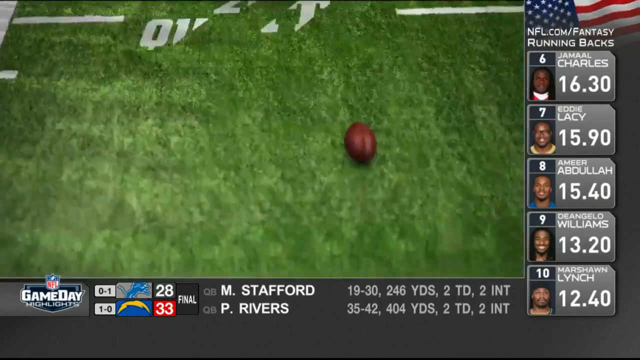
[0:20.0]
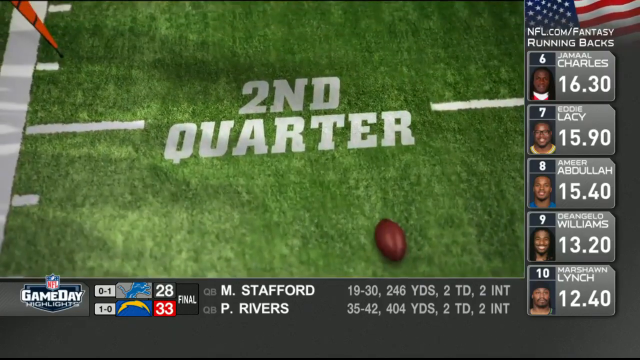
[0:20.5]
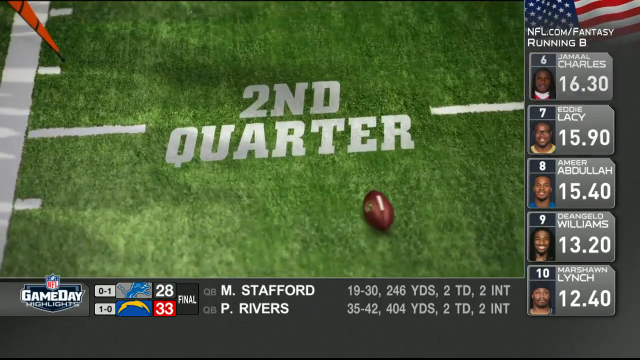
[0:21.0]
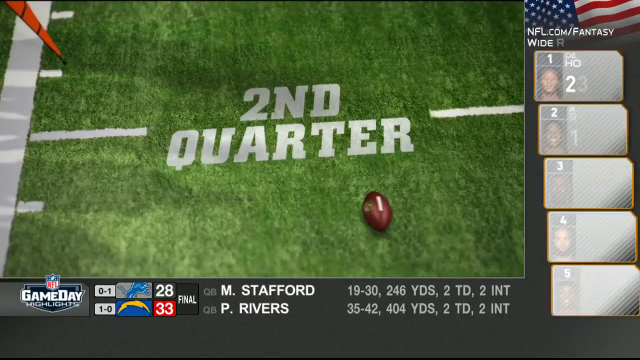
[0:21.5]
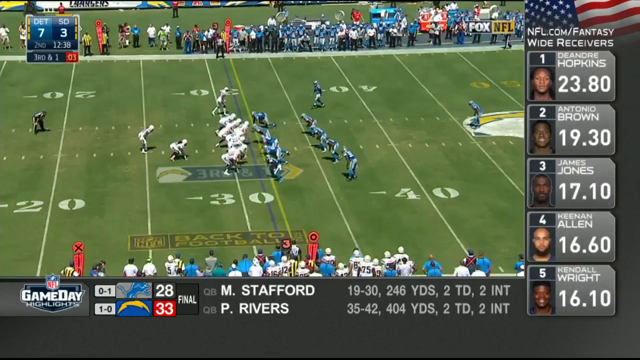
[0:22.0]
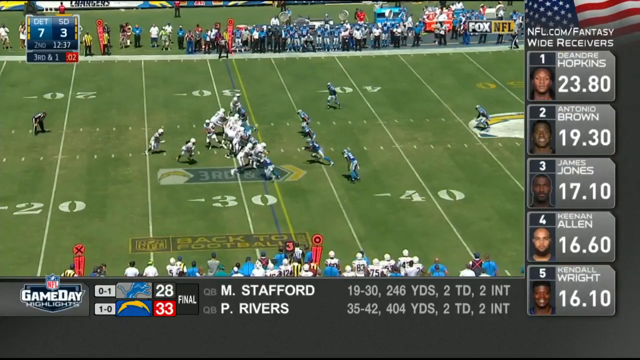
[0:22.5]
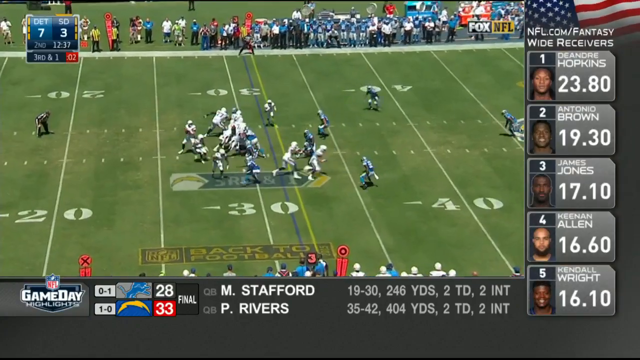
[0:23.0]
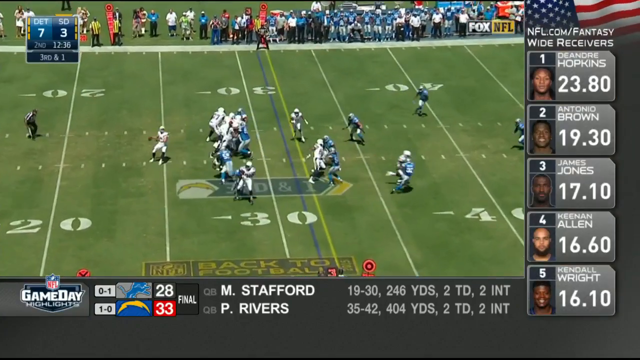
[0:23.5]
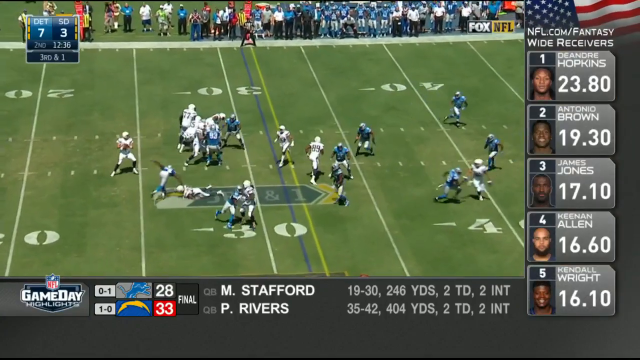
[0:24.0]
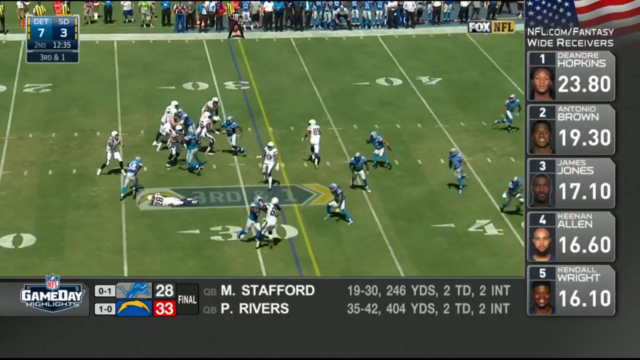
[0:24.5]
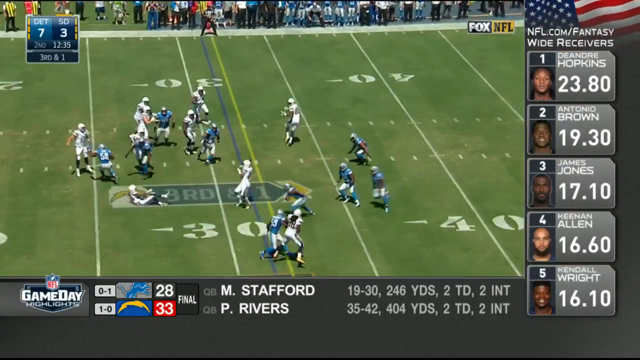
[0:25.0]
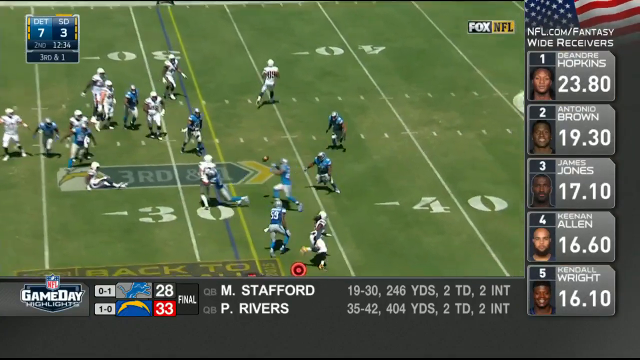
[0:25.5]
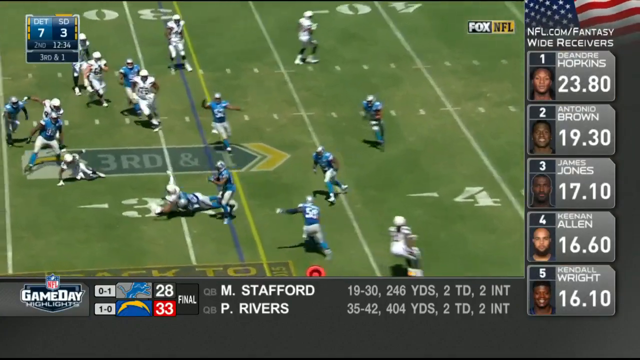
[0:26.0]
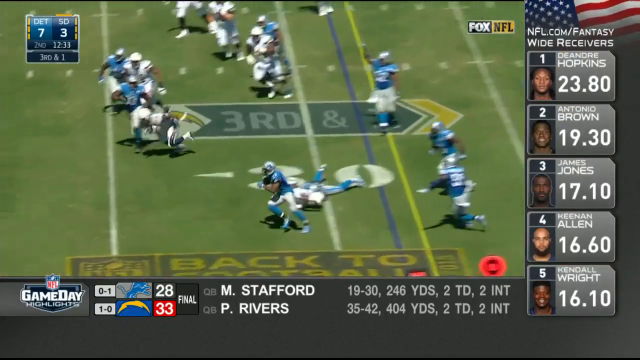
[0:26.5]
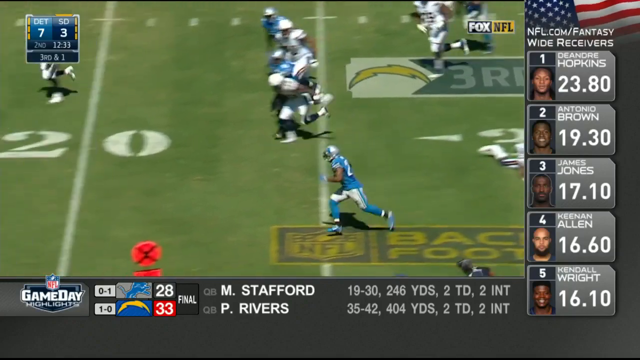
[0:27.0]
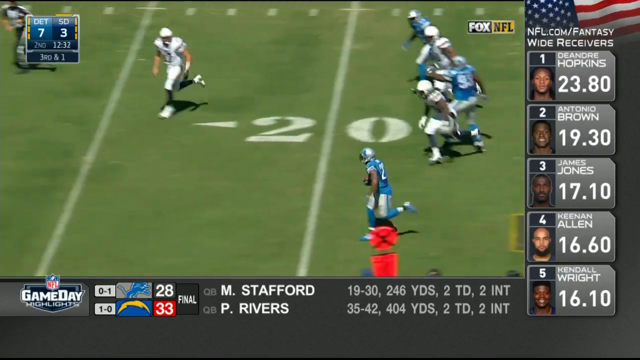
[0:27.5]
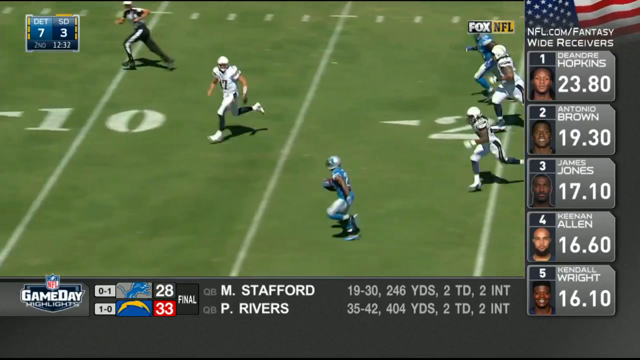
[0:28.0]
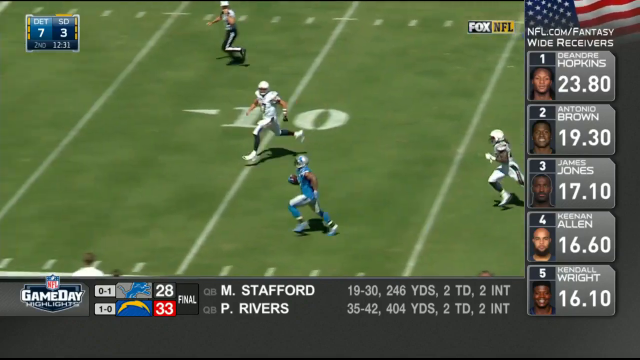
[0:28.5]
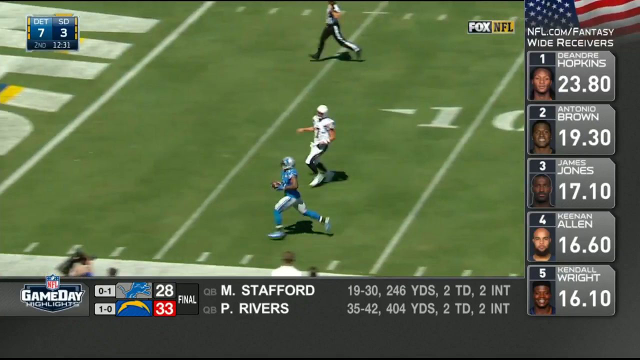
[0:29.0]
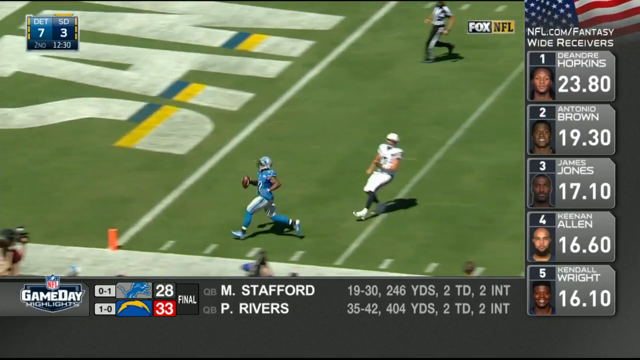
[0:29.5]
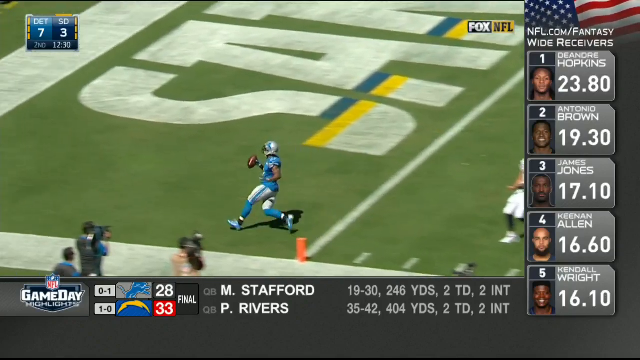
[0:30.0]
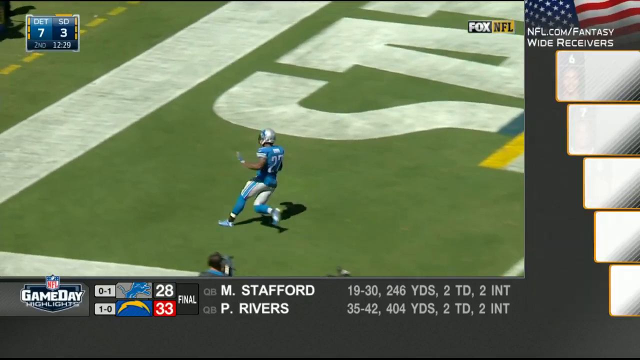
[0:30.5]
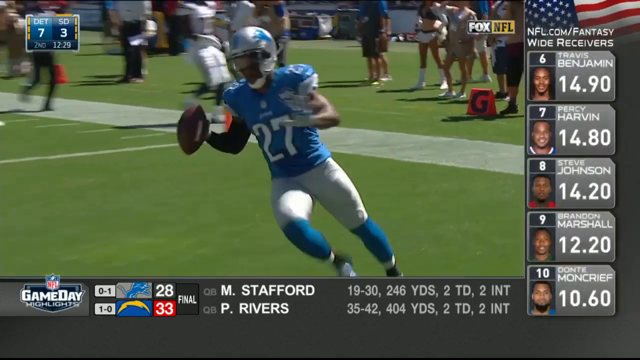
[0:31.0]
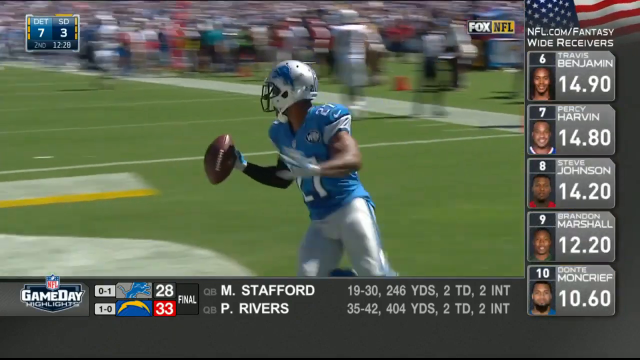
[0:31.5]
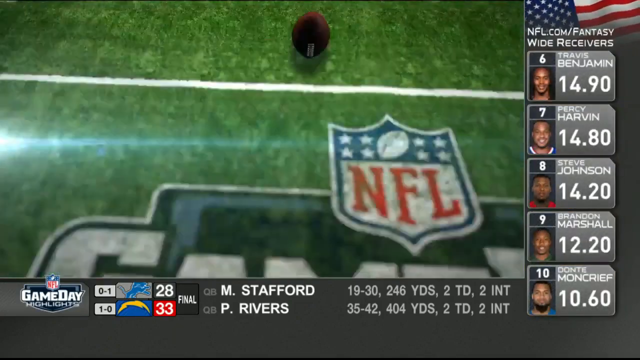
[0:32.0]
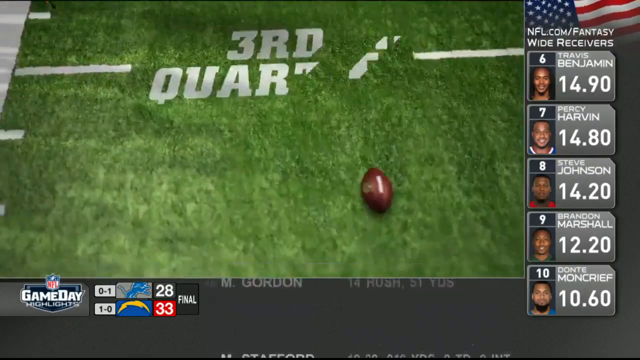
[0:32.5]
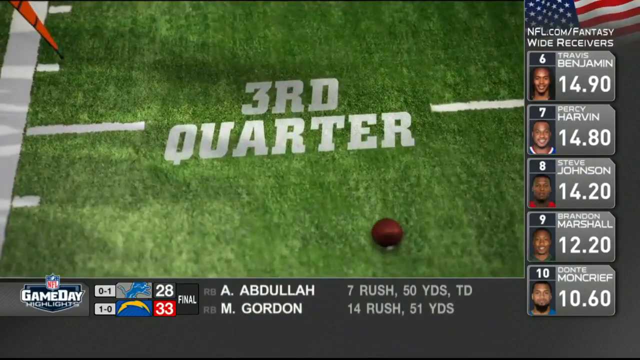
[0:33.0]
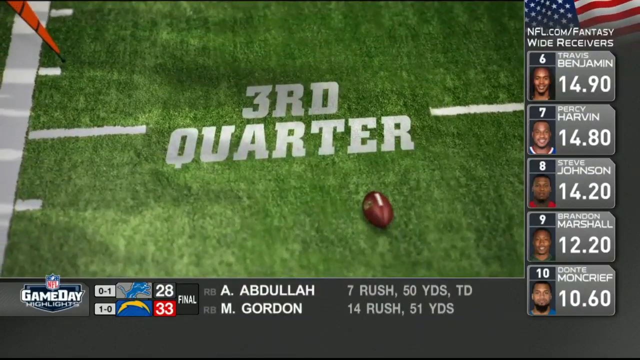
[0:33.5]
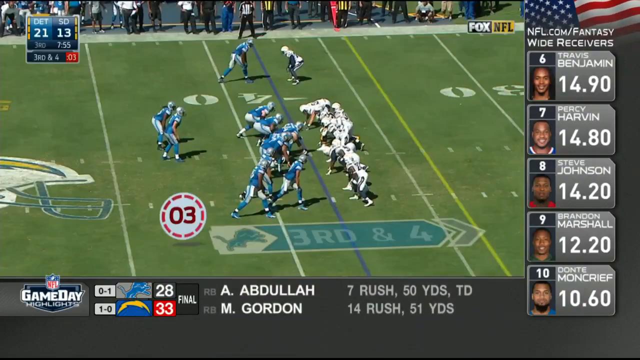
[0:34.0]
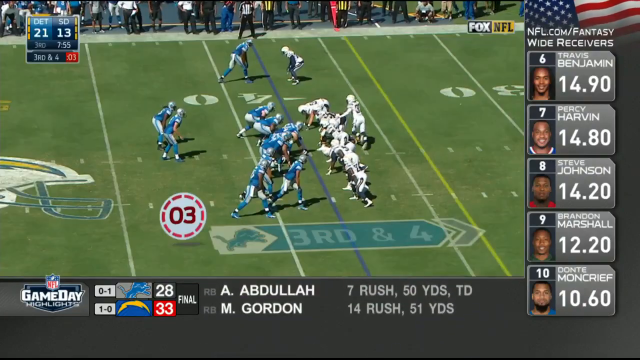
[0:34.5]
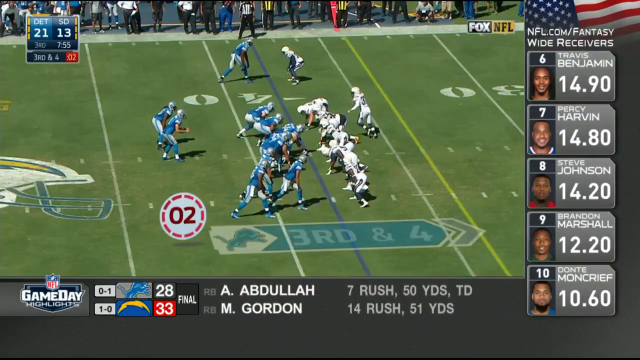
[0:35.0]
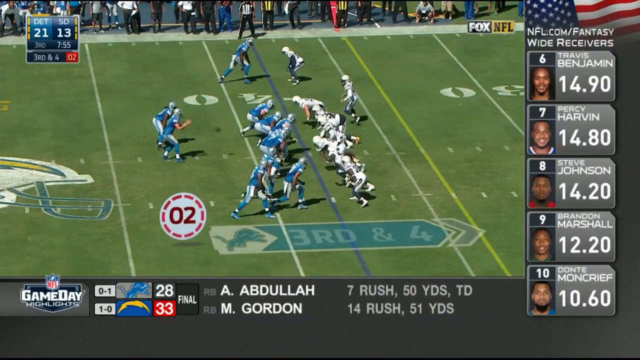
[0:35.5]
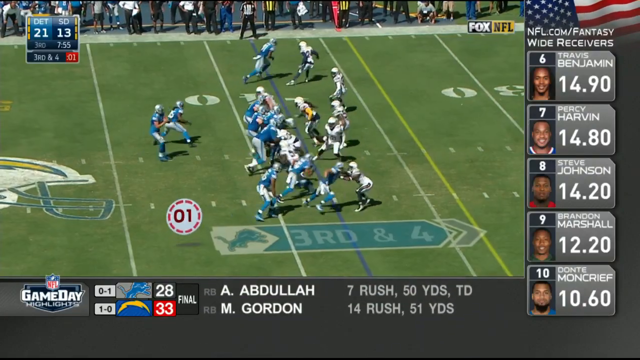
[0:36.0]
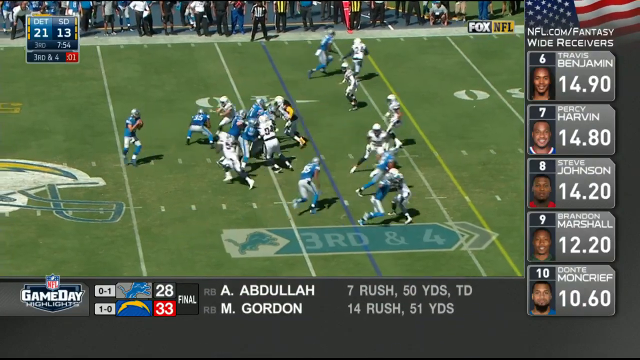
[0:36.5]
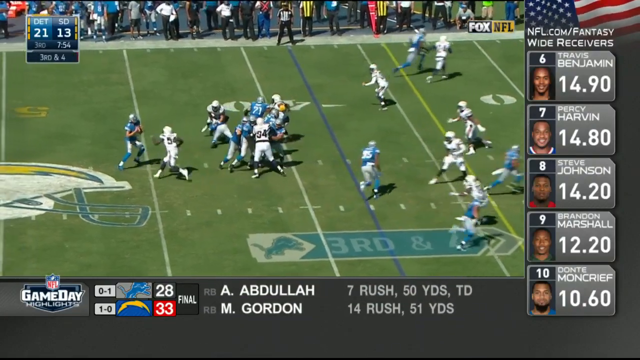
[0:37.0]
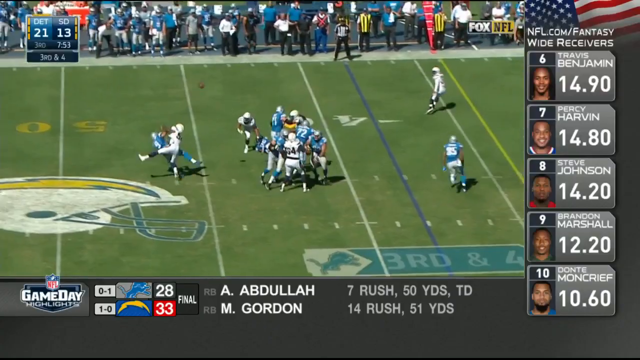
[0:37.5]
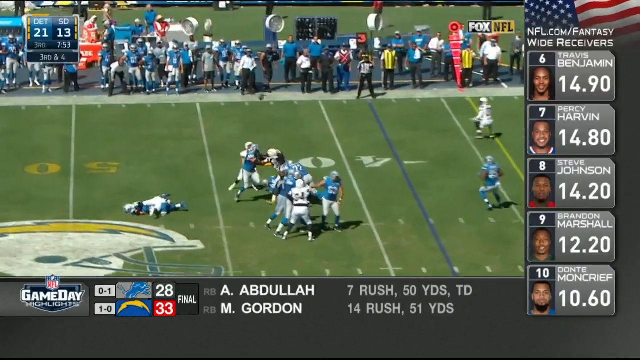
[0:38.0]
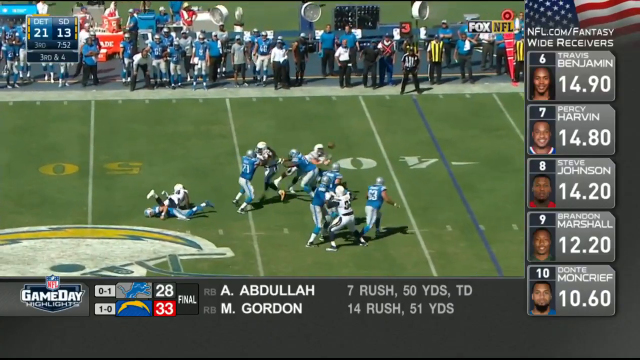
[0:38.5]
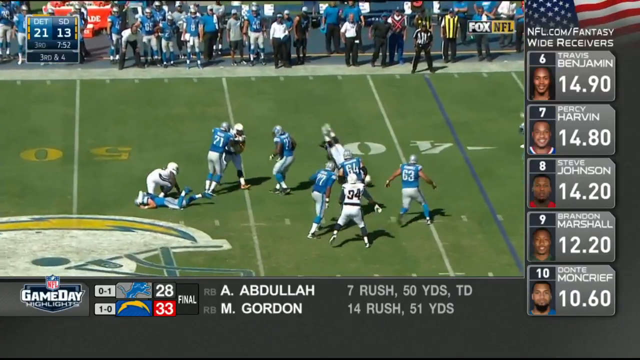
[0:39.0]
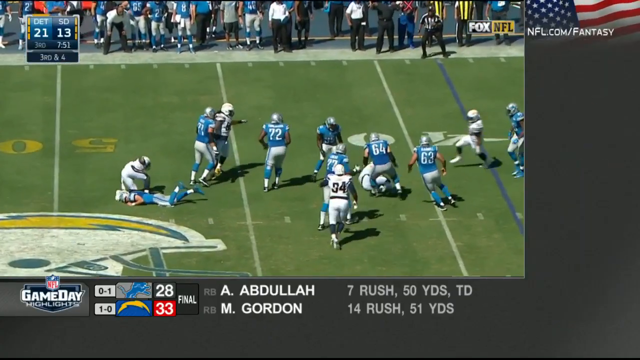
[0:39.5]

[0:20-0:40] The game footage, apparently of the Lions and the Chargers, continues after the touchdown with a brief graphic reading "NFL game day" in all white capitals, with the NFL logo above "game day," on a green turf background; a football appears to flip on the field in the graphic. The ball then sort of rolls up to a new graphic reading "second quarter" in white capitals. Another view of the game shows the white team on the left and the blue team on the right at the line of scrimmage at about the 30-yard line. The white team's quarterback gets the ball and apparently throws a short pass, which is missed but tipped and then intercepted by a player in blue. He runs the opposite direction, only about 25 yards, into the end zone, where large all-caps letters "S" and "A" are visible before the lettering is cut off. A front view follows of number 27 in blue, who made the play, holding the ball. The same NFL game day graphic then reads "third quarter" in white. In the next play the blue team is on the left; the quarterback gets the ball and drops back, and just as he is getting ready to pass he is sacked by someone in white. The ball goes up in the air without really being thrown and appears to be fumbled; a white player seems to jump on top of it as blue players start to come in around him.